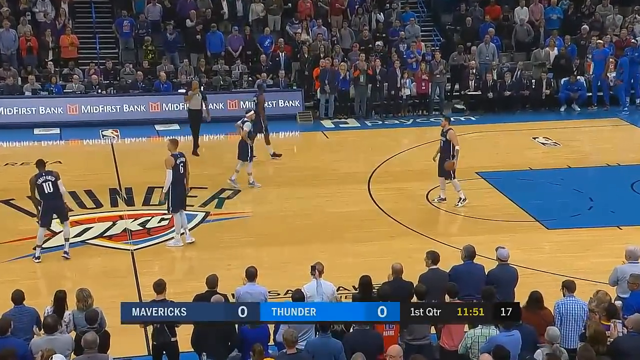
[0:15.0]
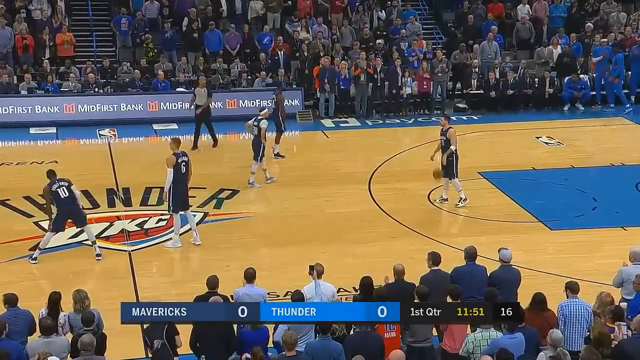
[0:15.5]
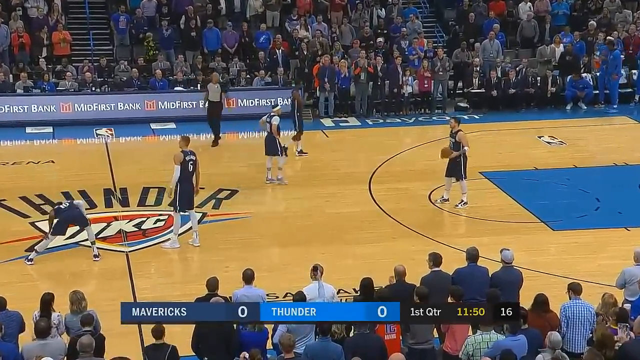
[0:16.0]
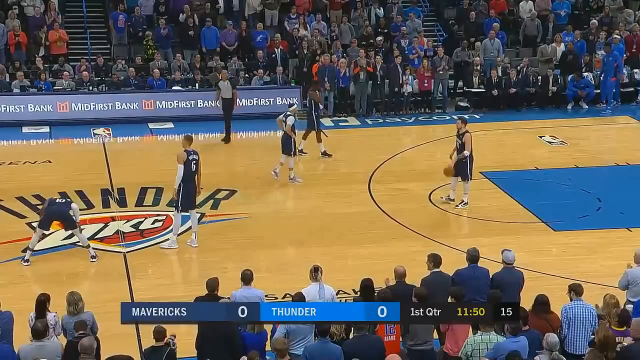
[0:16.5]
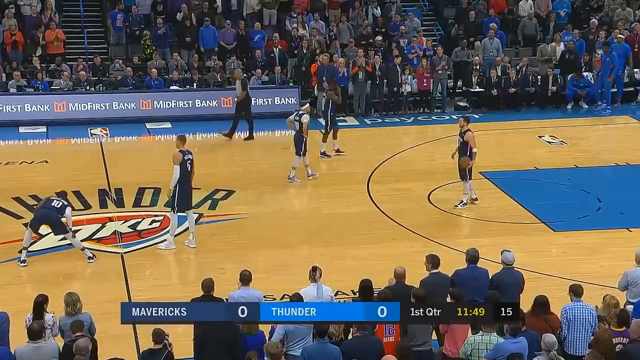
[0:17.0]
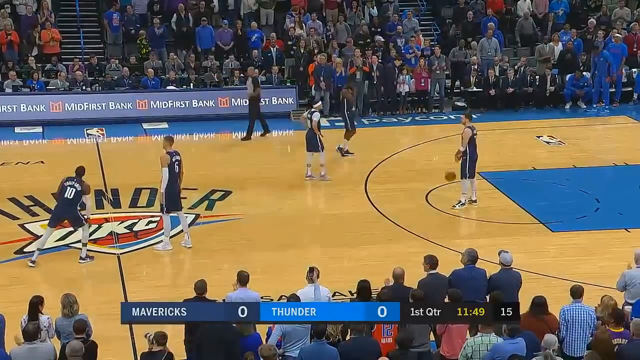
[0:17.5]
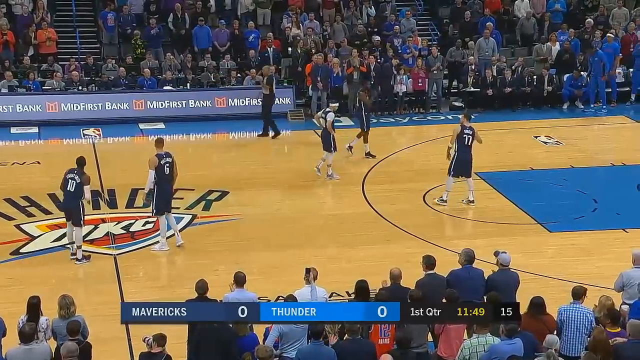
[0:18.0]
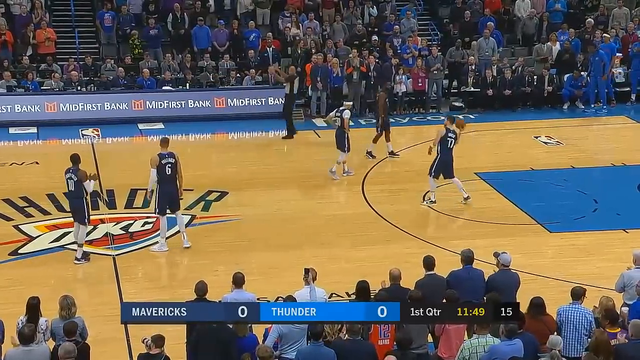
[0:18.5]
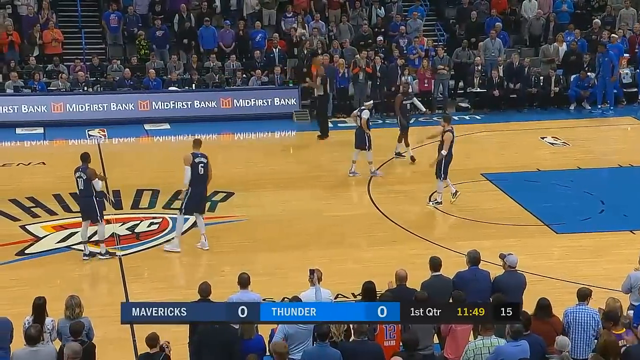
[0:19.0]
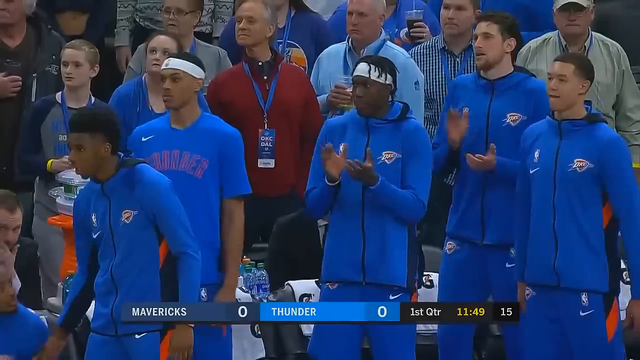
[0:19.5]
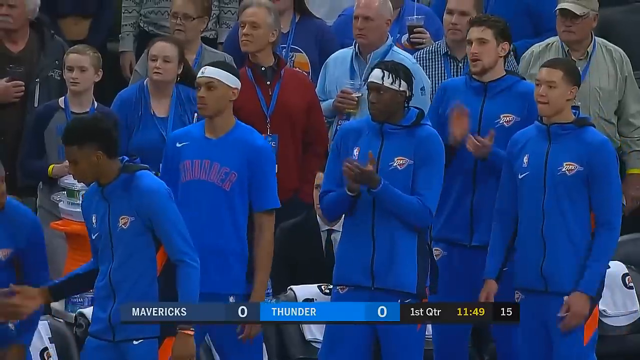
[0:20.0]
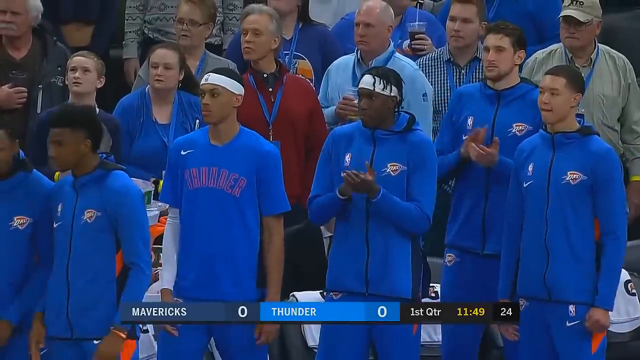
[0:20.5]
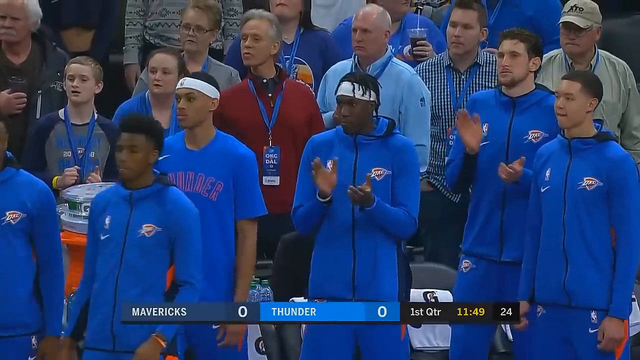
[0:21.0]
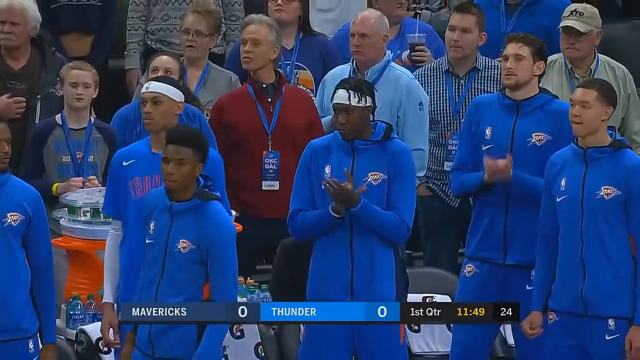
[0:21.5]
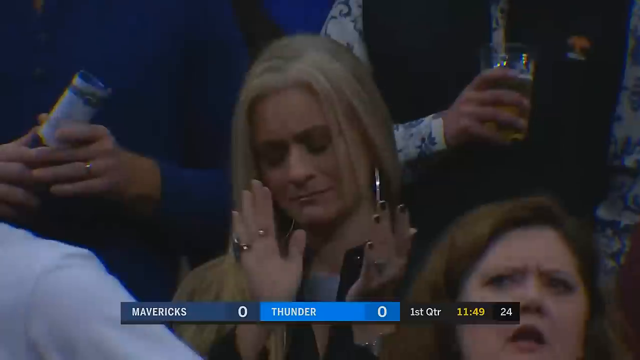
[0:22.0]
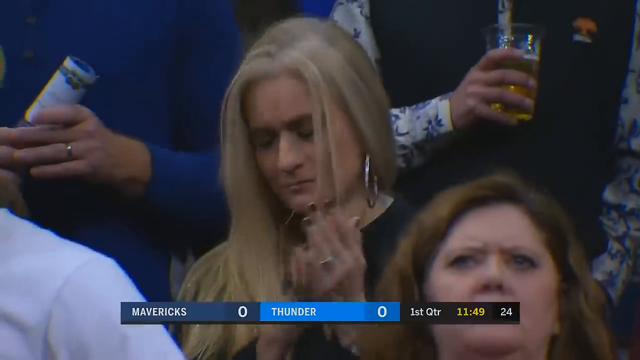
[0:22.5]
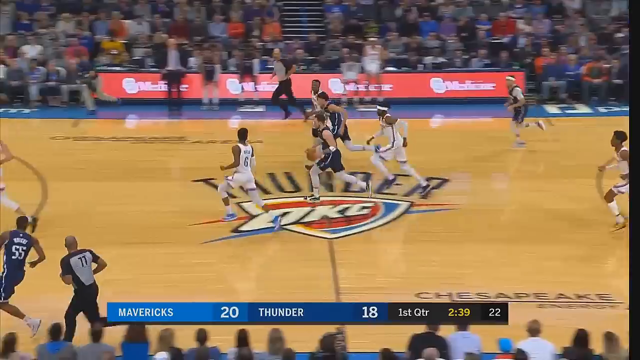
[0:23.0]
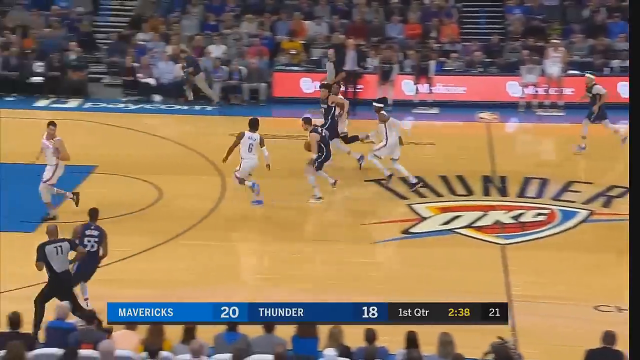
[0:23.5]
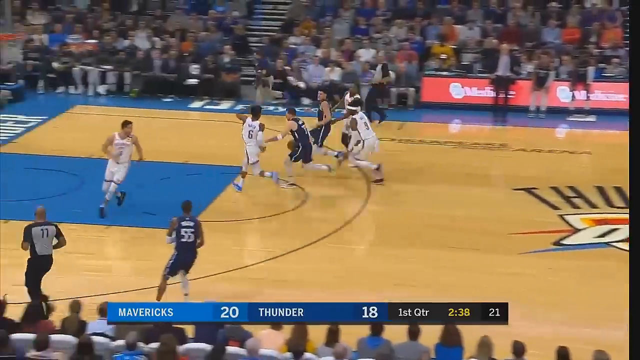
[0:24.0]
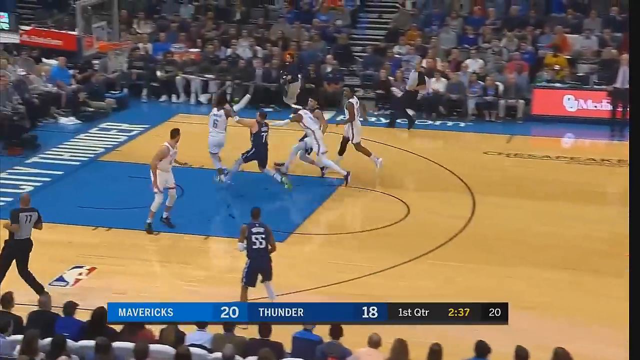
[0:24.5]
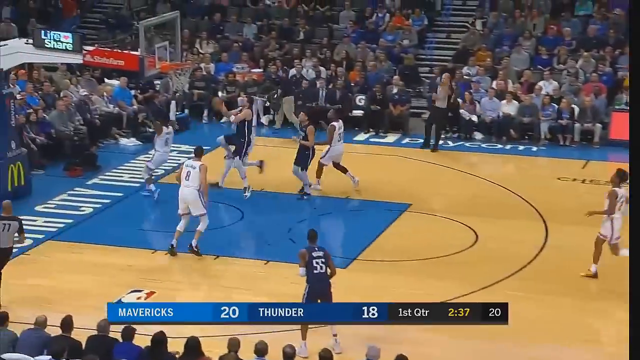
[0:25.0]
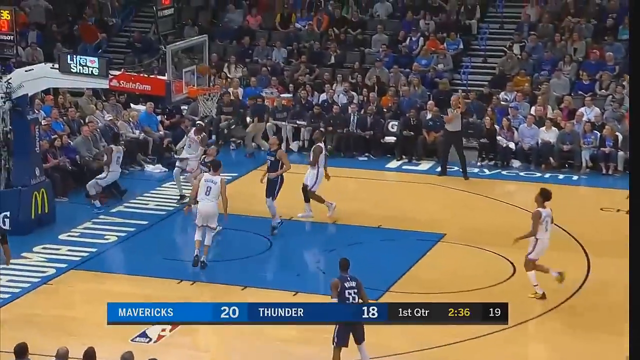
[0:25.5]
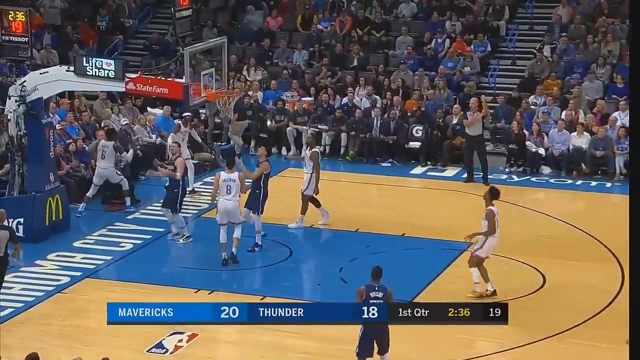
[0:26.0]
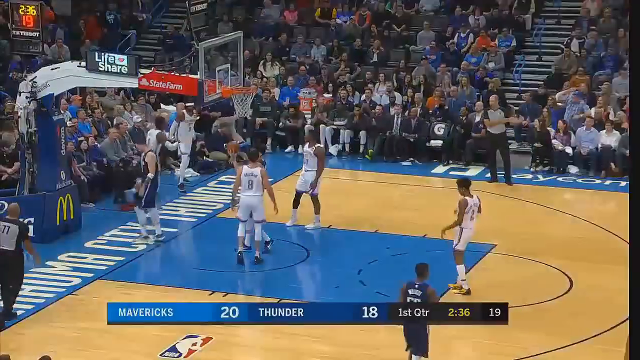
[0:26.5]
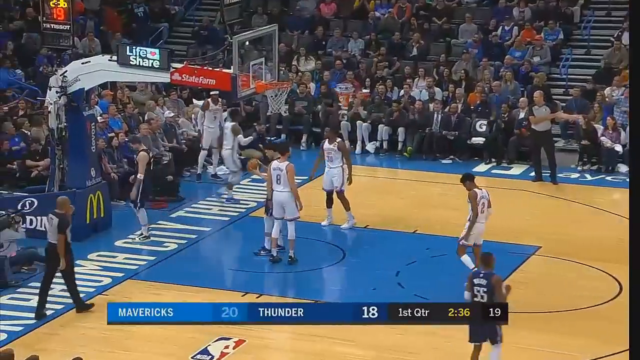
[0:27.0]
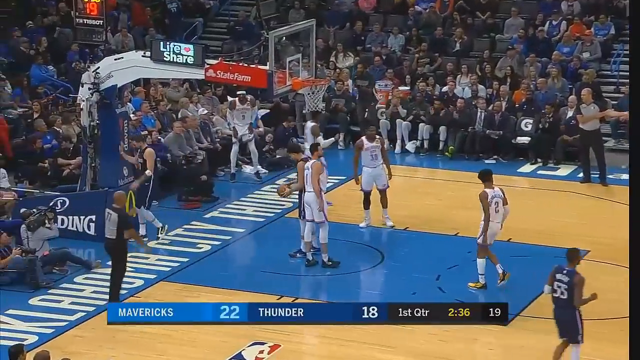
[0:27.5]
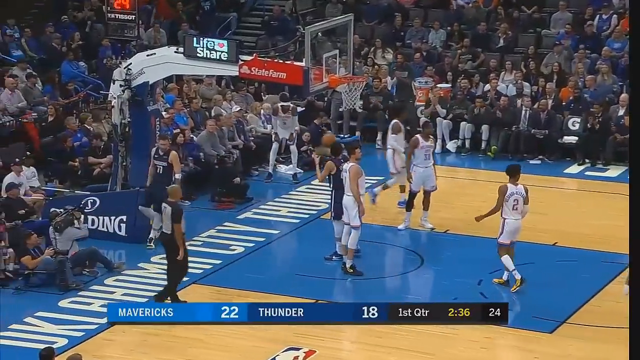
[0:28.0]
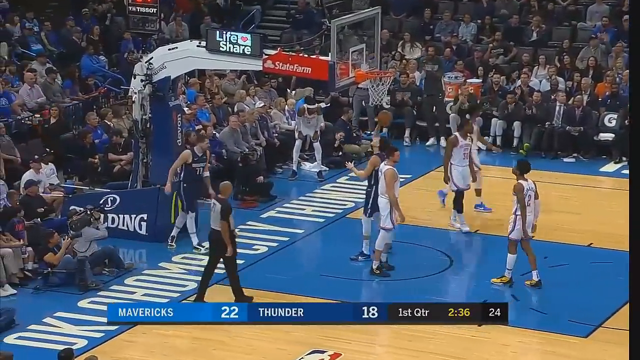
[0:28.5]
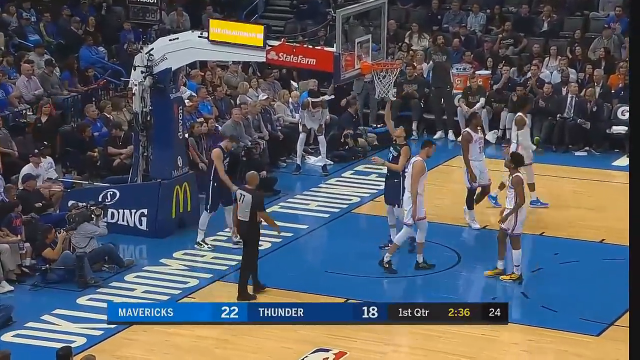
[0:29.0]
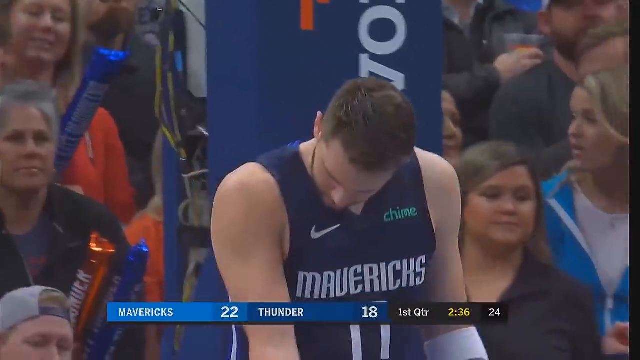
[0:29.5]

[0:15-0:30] A player slowly dribbles the ball and then throws it off to the side. The score becomes 22 to 18 as the Mavericks player Doncic scores. The video jumps ahead in the game to highlights of Doncic, and he makes a layup. A close-up shows a blonde woman in the stands who doesn't look particularly happy but is clapping. Prior to Doncic's layup, players from Oklahoma City are standing up and clapping. The Dallas Mavericks wear blue uniforms, and Oklahoma City wears their home white uniforms. The floor underneath each basket is painted a bright blue, very similar to the warm-ups worn by Oklahoma City players.